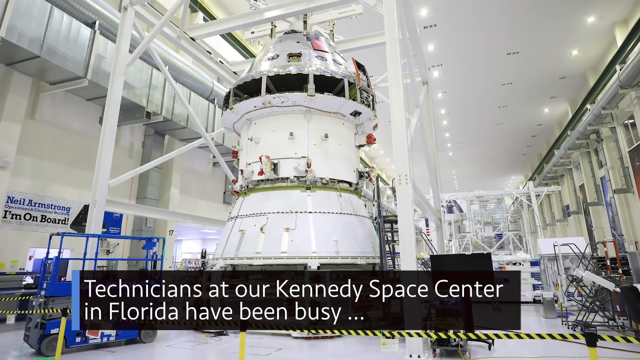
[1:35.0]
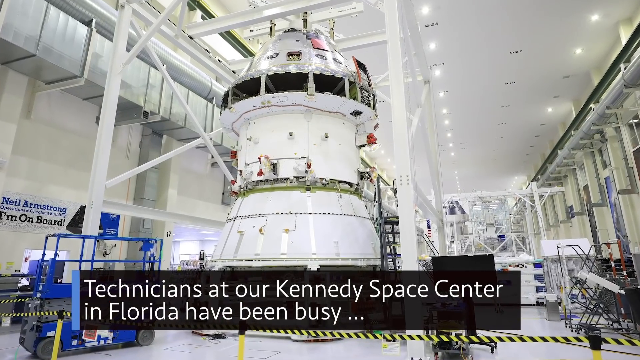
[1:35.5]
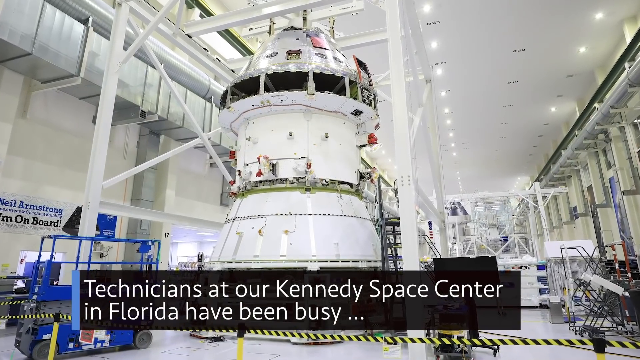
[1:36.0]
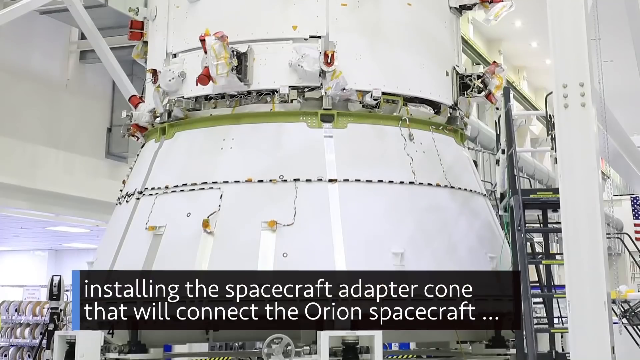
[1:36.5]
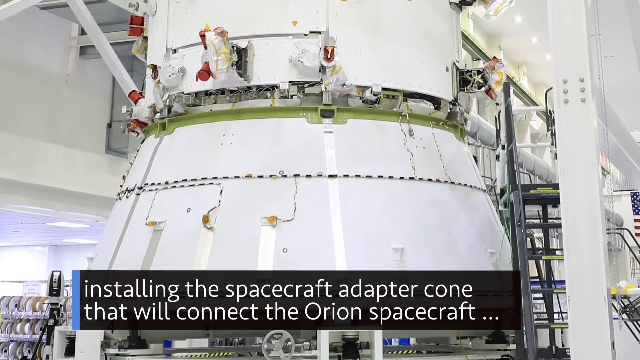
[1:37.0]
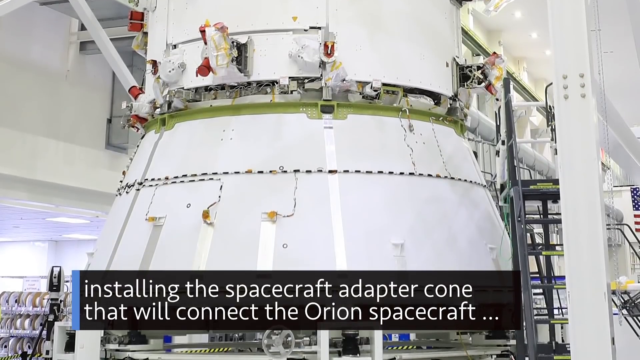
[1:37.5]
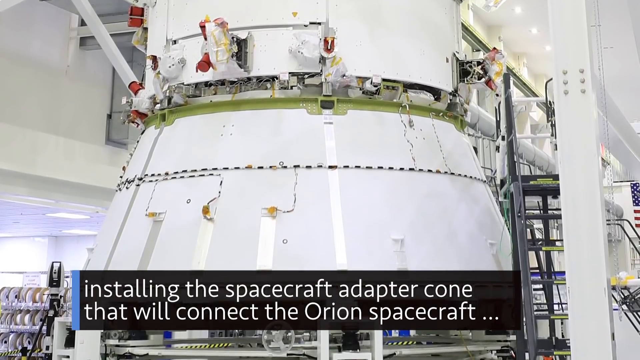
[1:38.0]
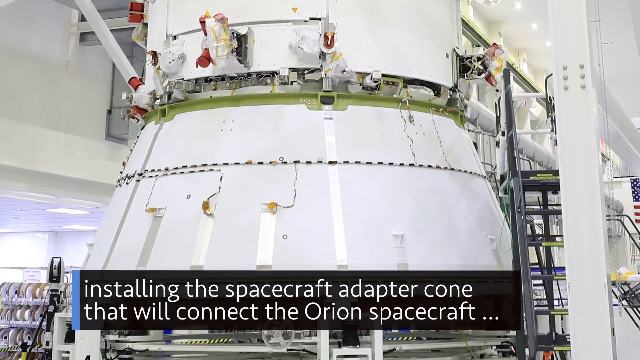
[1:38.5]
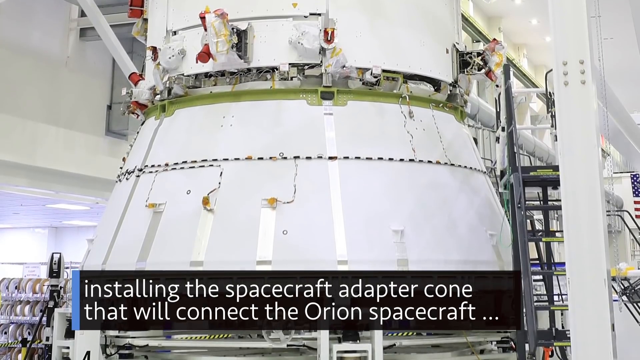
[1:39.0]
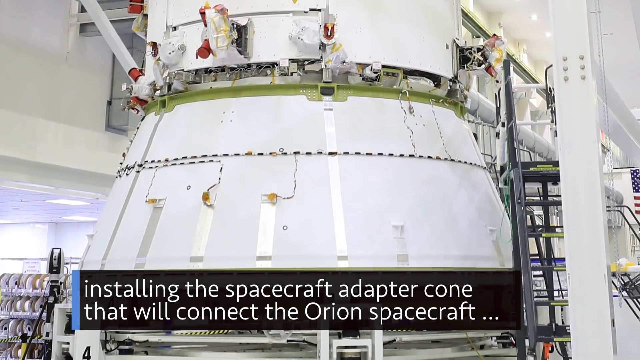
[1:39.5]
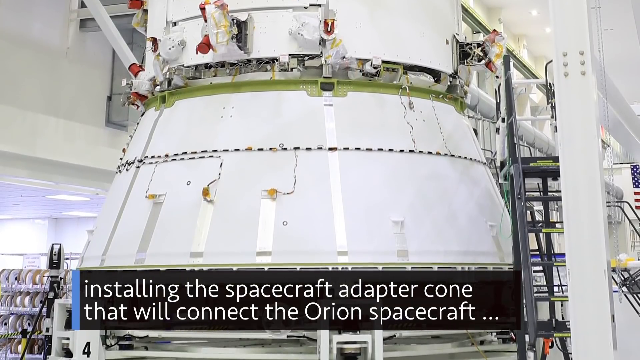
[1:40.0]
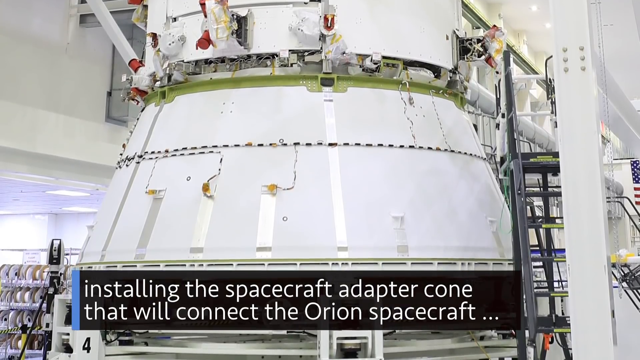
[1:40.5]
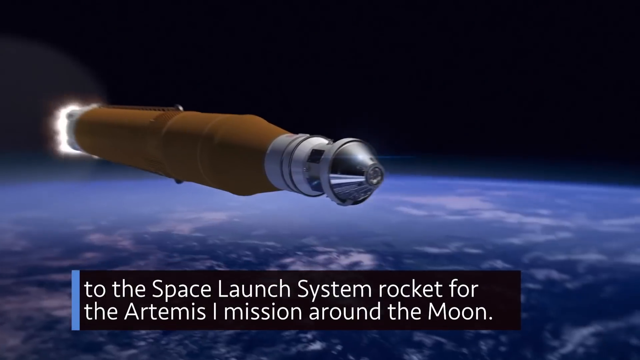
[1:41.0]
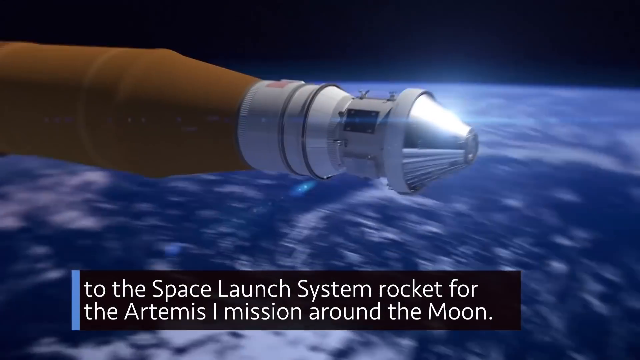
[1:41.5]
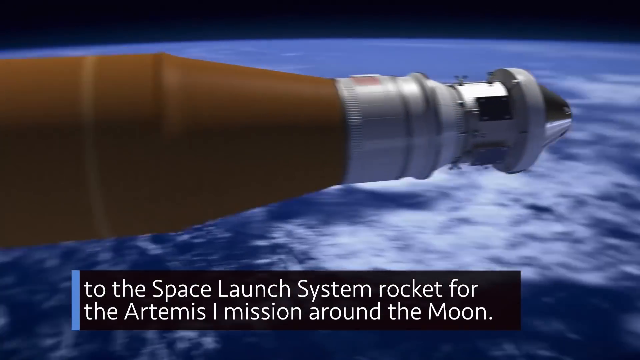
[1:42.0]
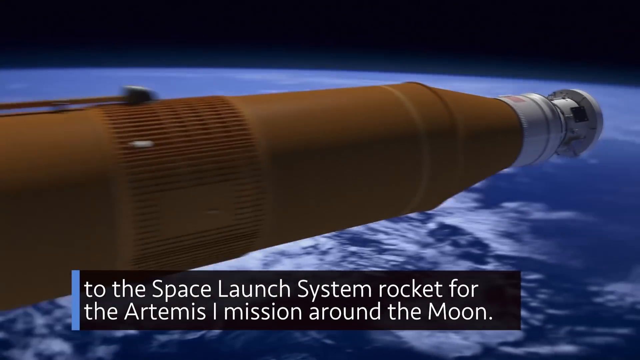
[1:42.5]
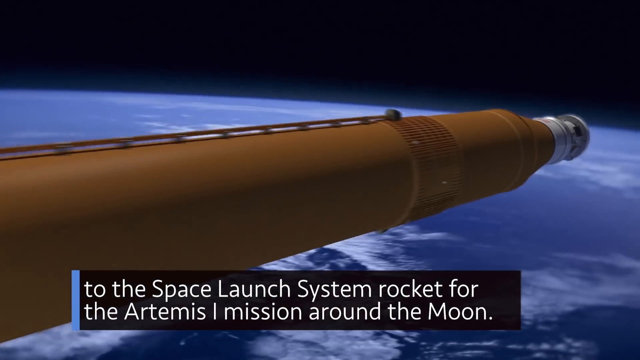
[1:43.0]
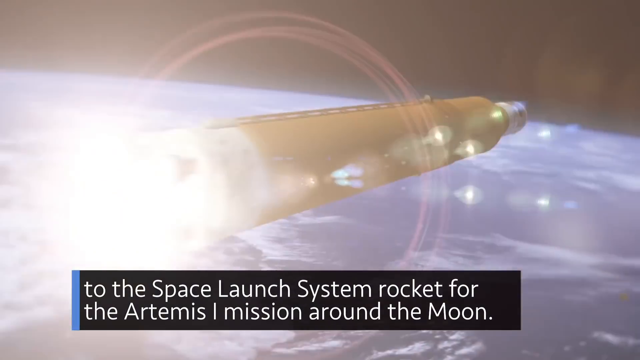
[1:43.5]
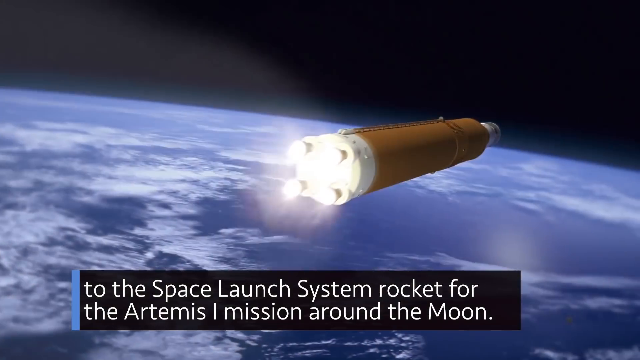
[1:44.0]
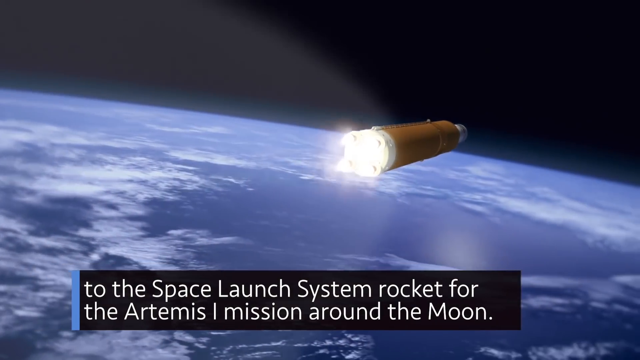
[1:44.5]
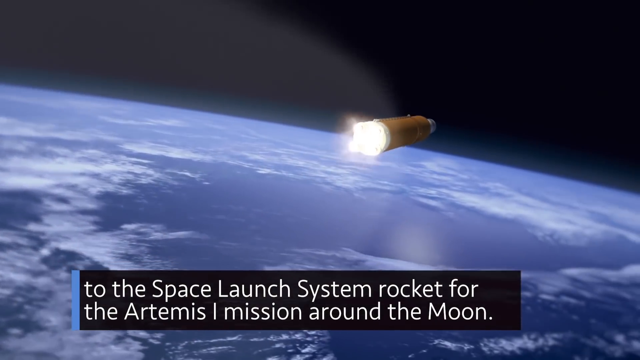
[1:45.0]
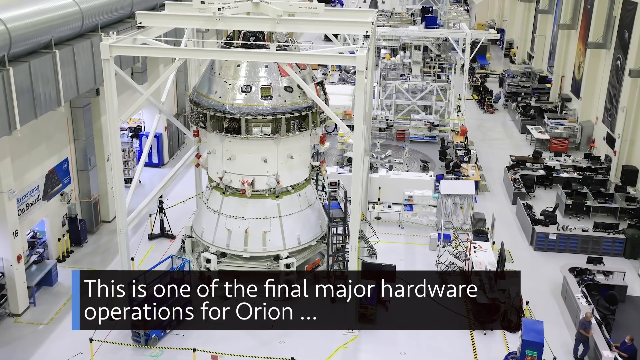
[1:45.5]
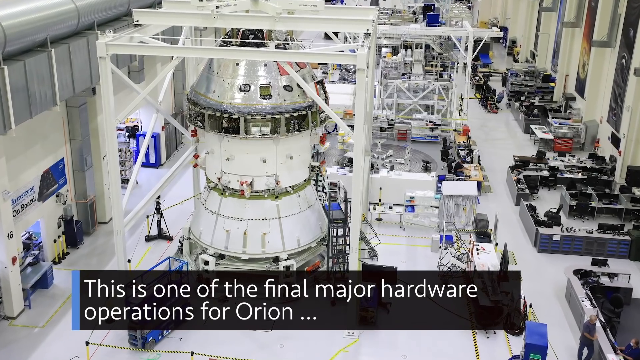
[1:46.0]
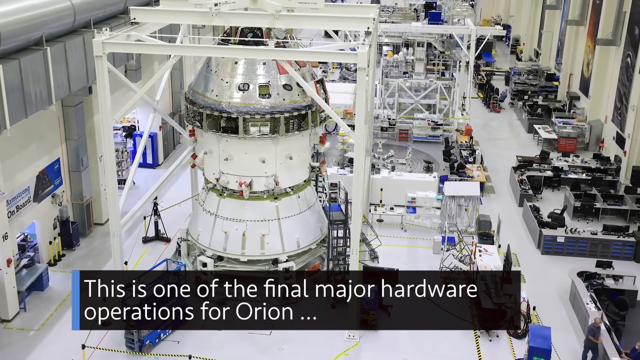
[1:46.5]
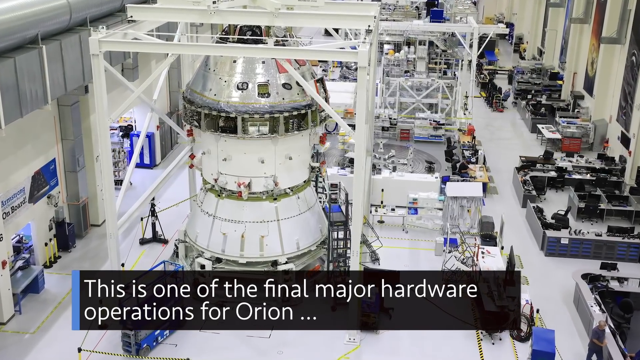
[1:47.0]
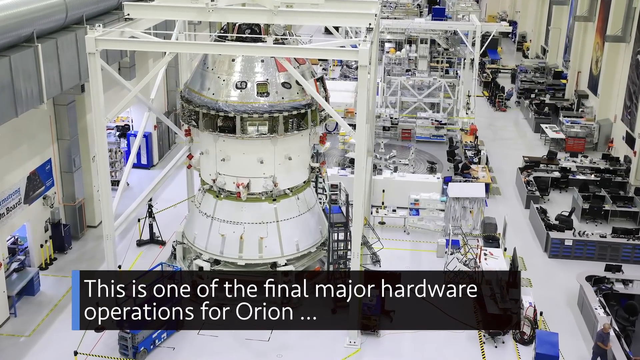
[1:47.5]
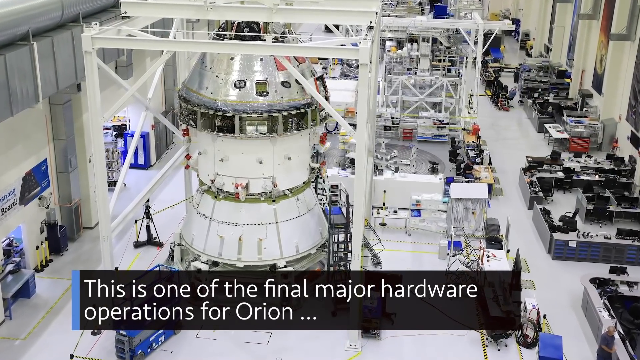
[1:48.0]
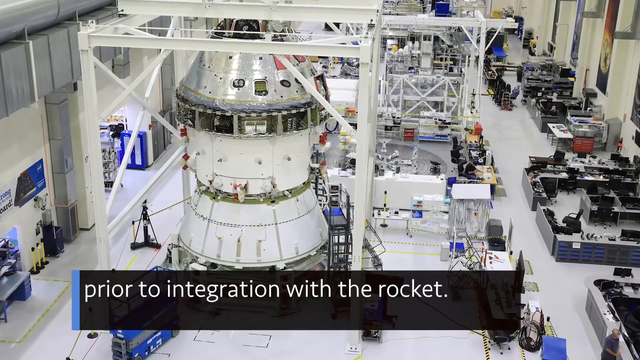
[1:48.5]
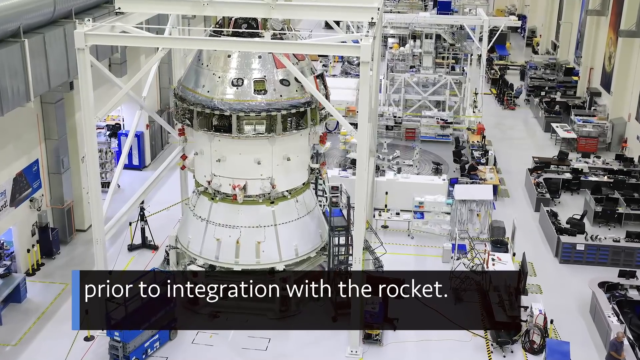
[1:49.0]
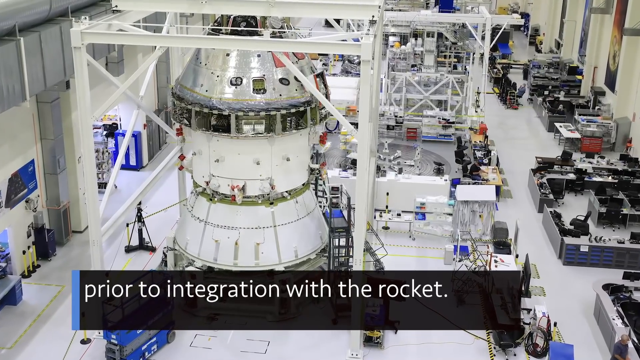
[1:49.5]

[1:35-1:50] The view is apparently inside the Kennedy Space Center in Florida, as the banner at the bottom says, with white machinery and pieces of the aircraft. The scene changes to a bottom view of what looks to be the rocket, showing the white launcher, with the banner "installing the spacecraft adapter cone that will connect the Orion spacecraft." Next, a generated image shows the rocket flying in space, silver at the top with a long orange body, and the banner reads "to the space launch system rocket for the Artemis 1 mission around the moon." The view then returns inside the Kennedy Space Center to the white and silver machine part, with a lot of assembly pieces around it; the banner reads "this is one of the final major hardware operations for Orion" and then changes to "prior to integration with the rocket."